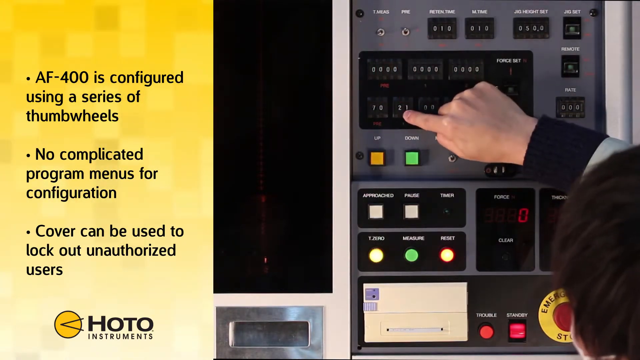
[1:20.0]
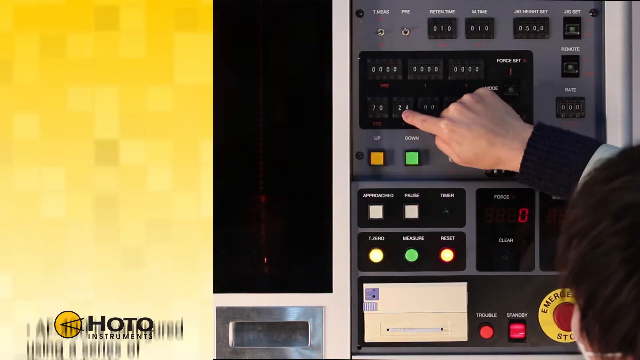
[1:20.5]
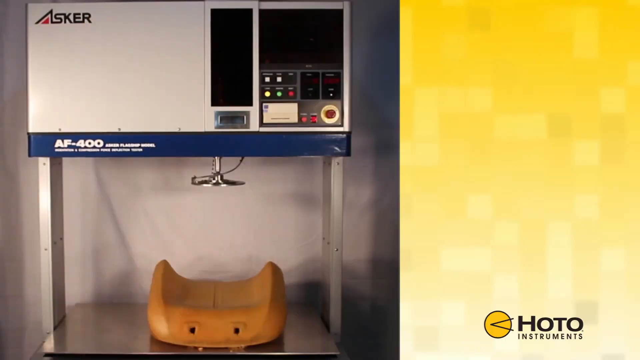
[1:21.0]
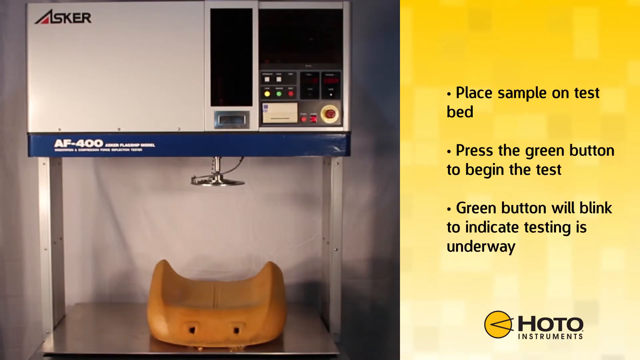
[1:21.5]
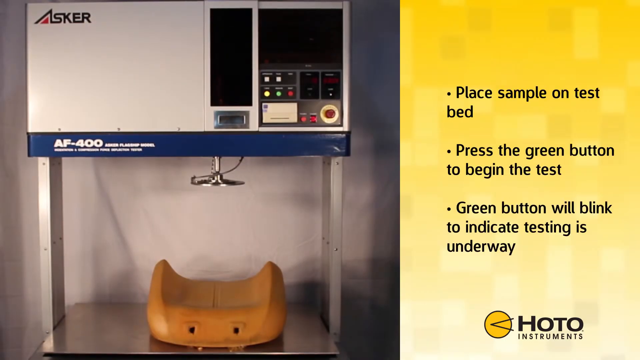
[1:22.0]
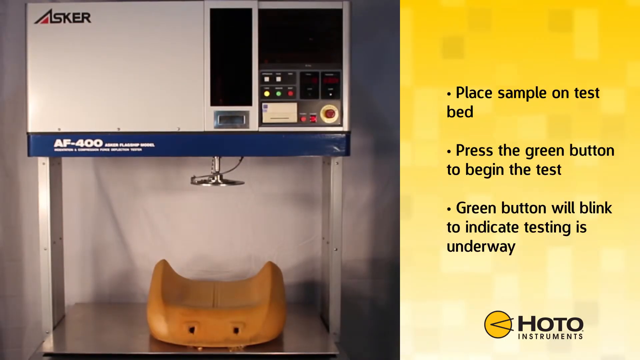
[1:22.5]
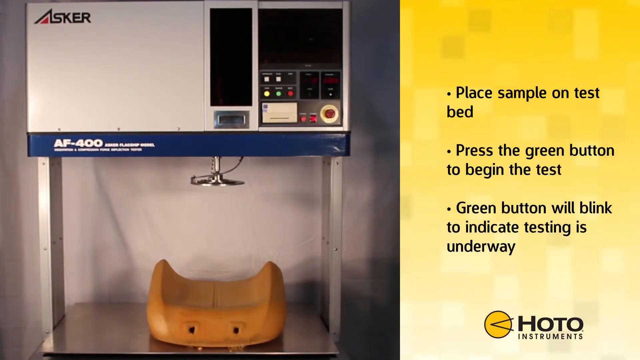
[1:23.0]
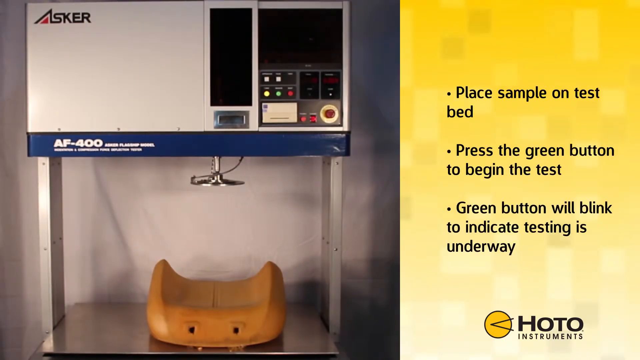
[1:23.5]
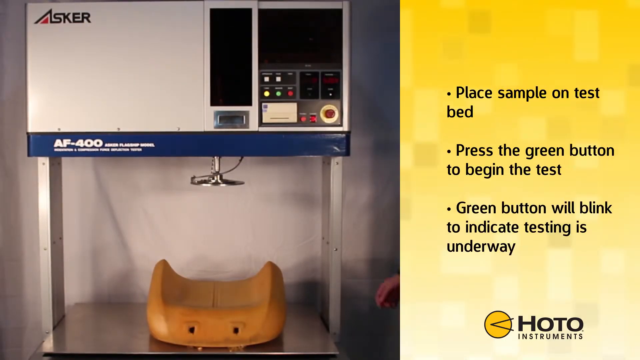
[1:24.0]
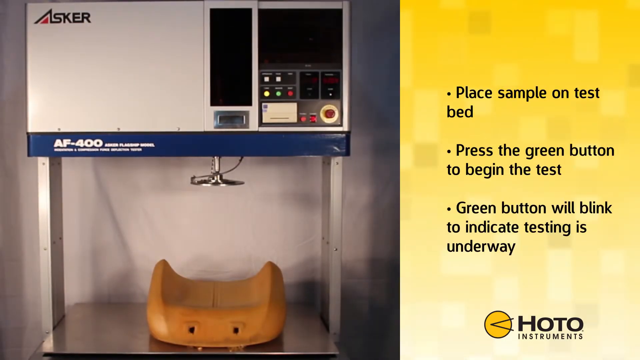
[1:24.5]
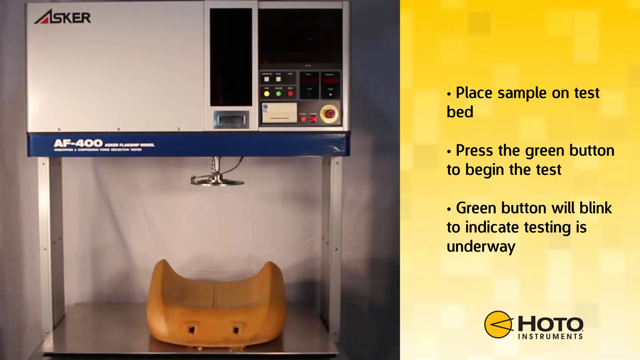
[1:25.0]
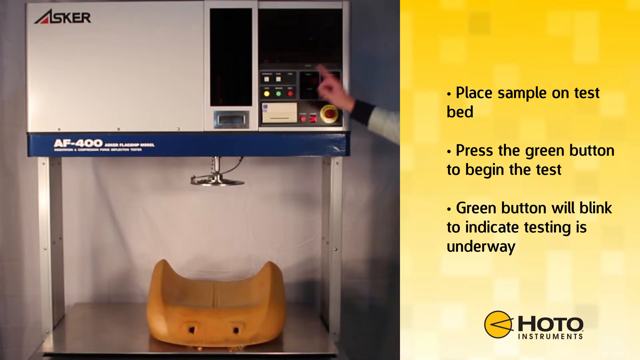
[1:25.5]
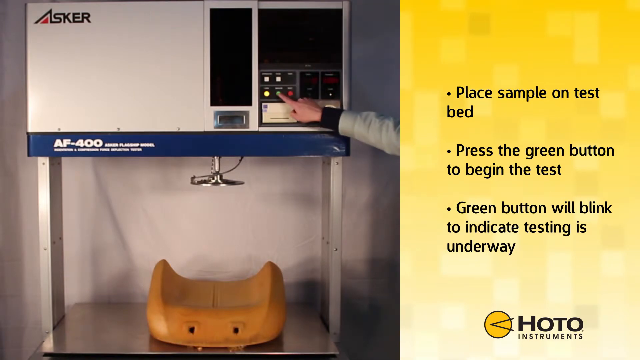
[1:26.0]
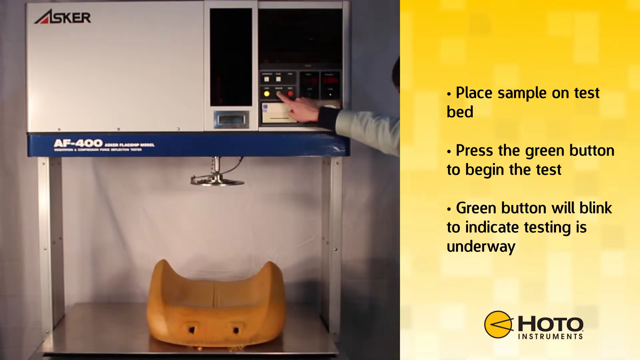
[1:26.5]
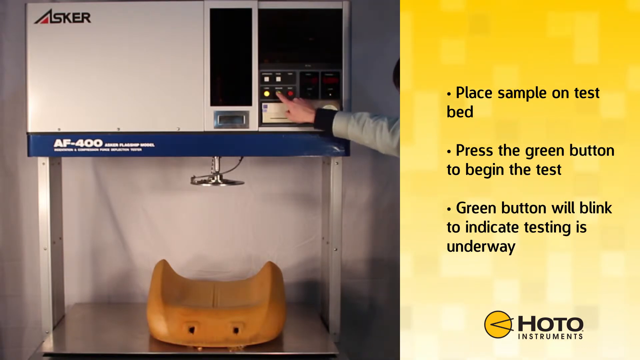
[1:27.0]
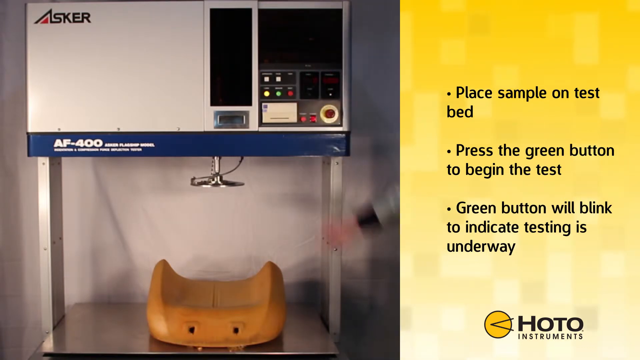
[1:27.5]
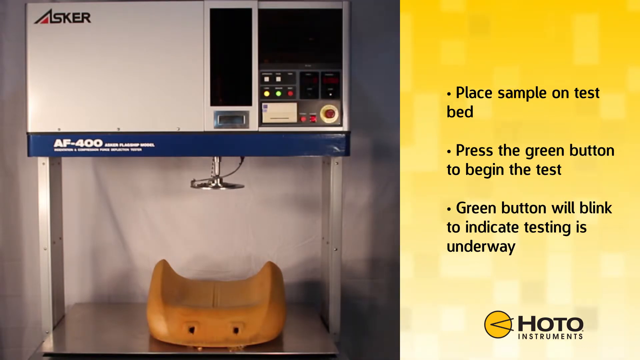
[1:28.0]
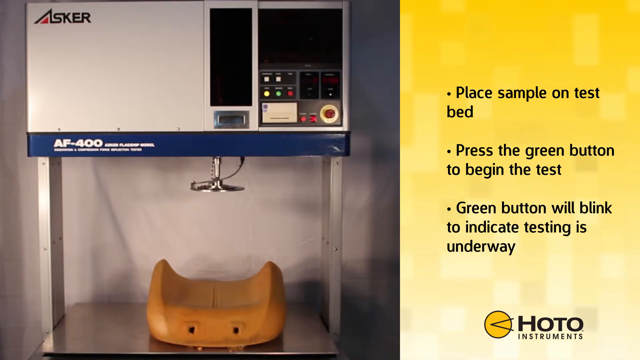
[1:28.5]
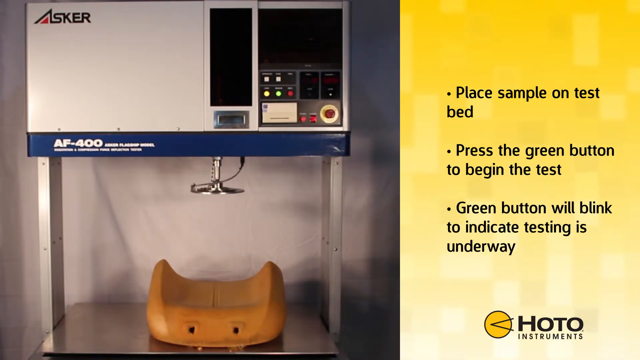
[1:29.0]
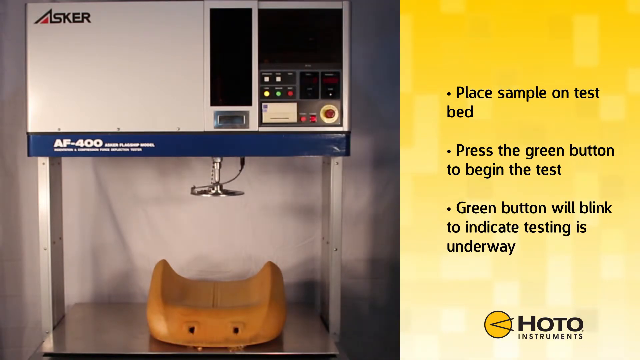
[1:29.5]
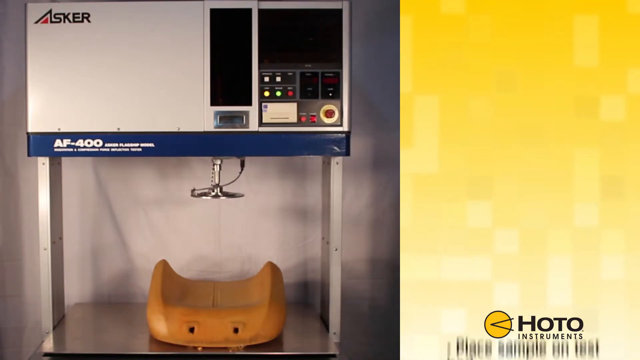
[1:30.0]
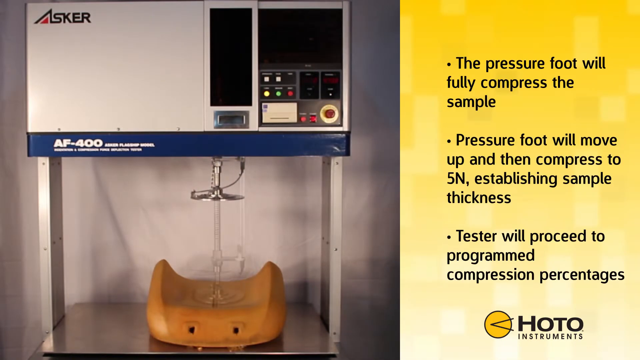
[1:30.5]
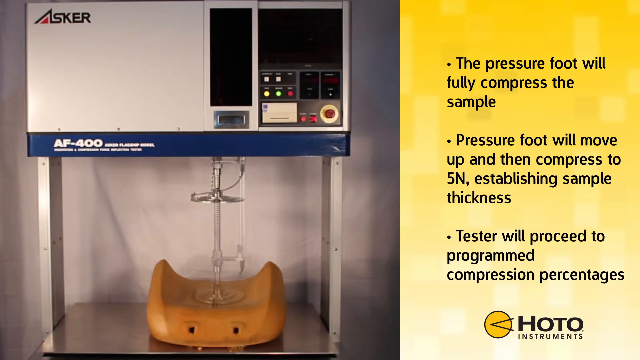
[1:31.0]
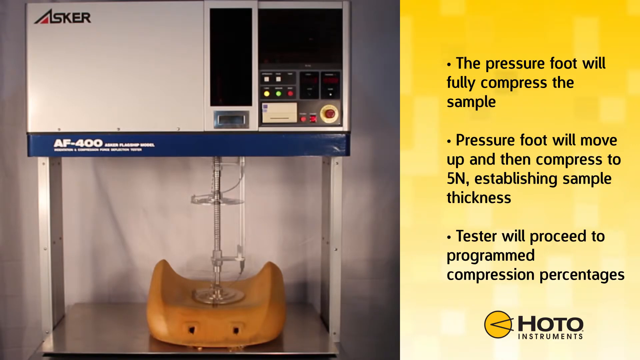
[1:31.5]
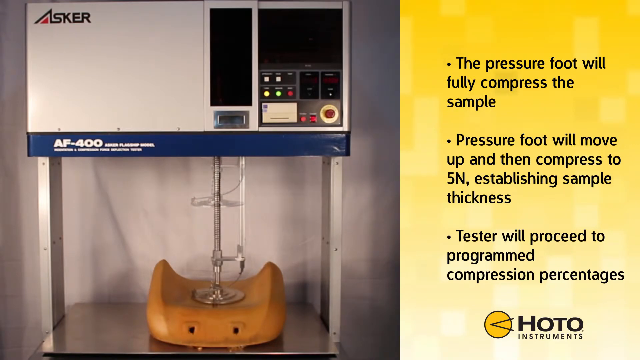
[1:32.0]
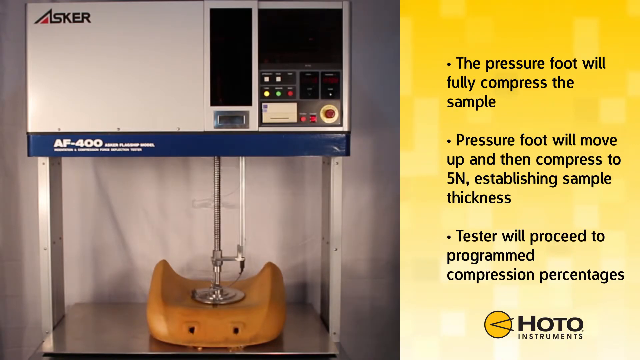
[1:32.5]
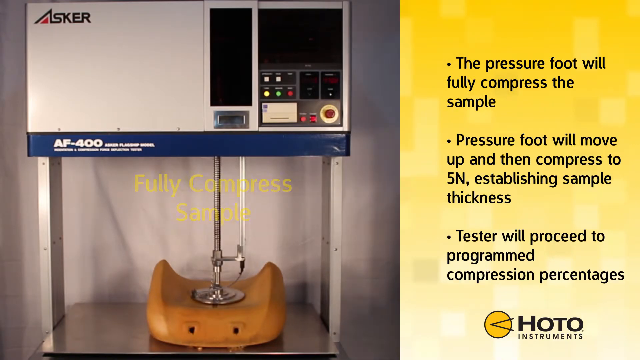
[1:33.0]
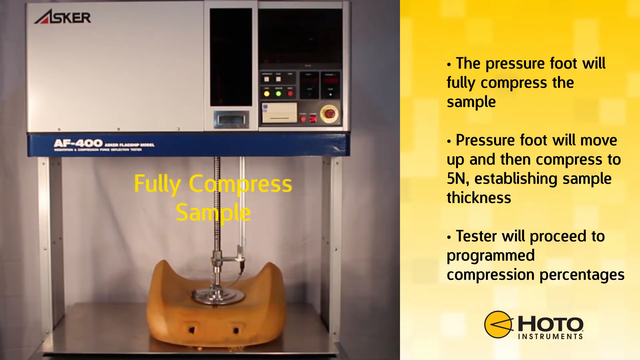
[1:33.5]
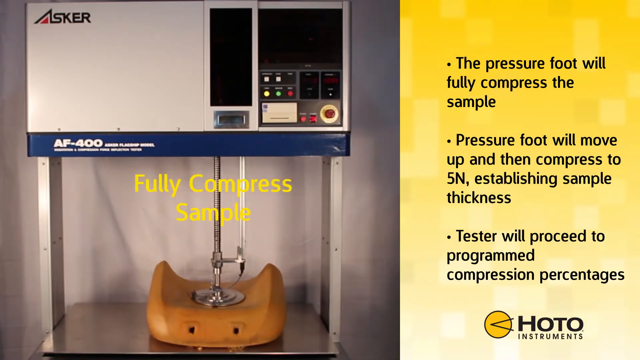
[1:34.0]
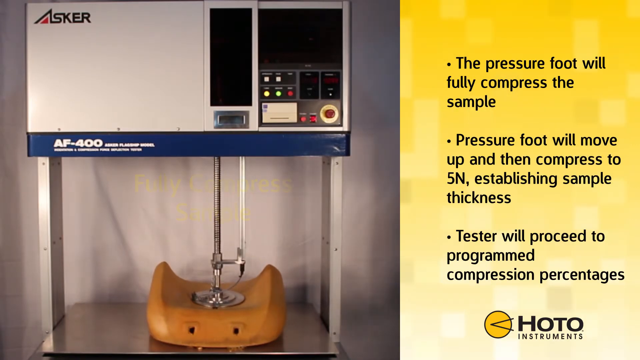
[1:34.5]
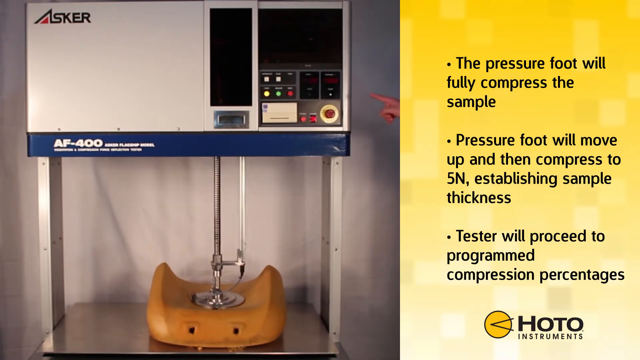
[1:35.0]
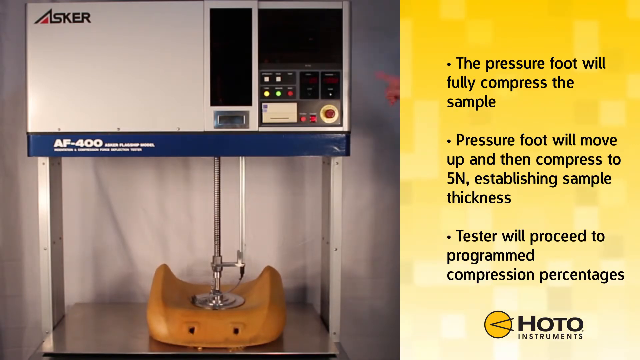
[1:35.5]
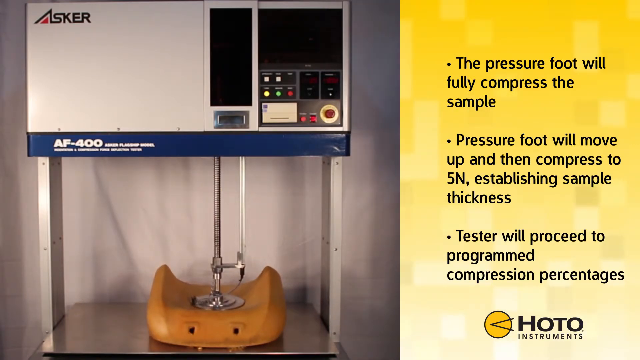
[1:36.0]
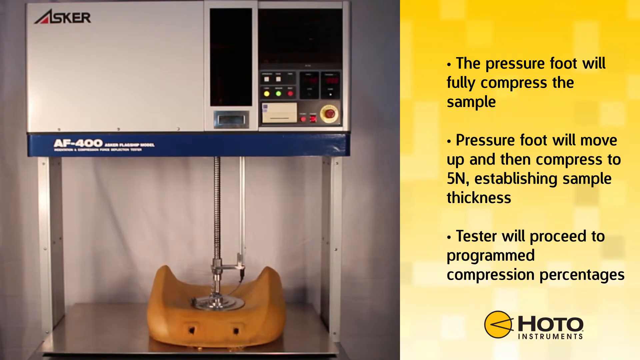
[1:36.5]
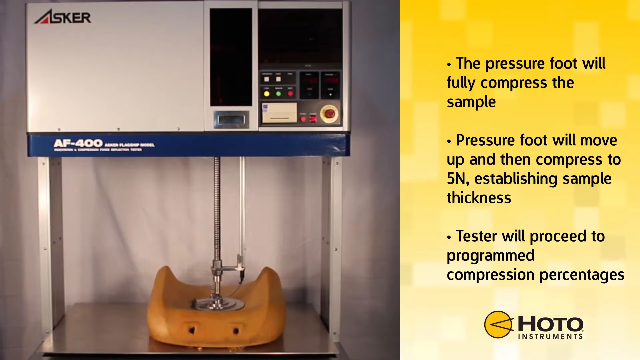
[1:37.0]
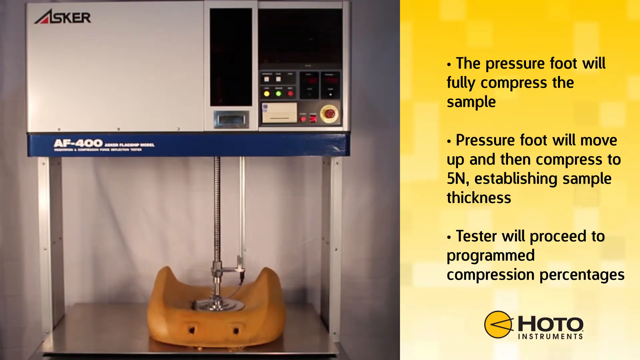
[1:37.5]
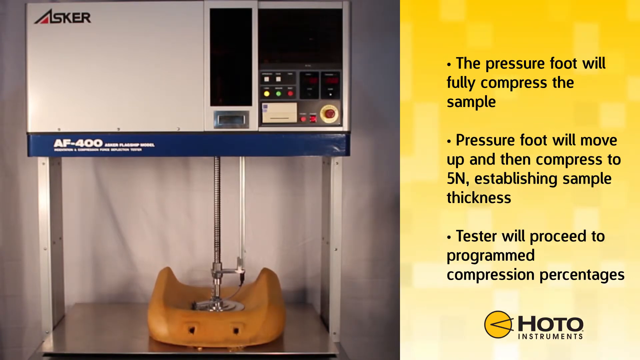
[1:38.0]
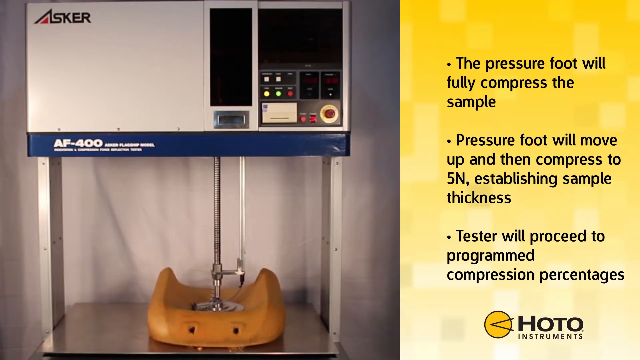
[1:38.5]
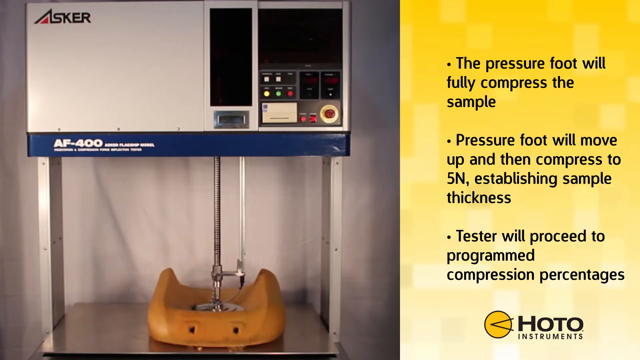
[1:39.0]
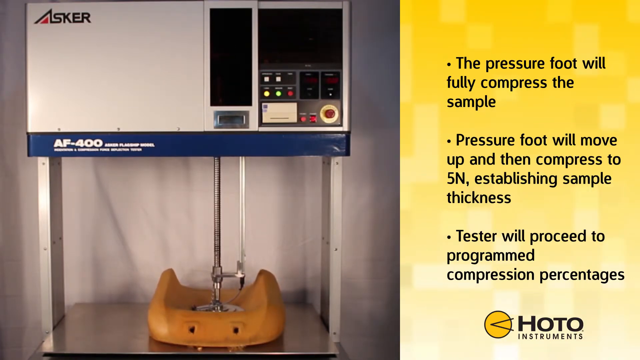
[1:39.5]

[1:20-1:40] A slide describes how the machine is configured: "thumb wheels", "no complicated menus", "cover can be used to lock out unauthorized users". The final images show someone kind of pushing on buttons. Another screen follows with three more bullet points: "place sample on test bed", a line about the green button, and "green button will blink to indicate testing is underway". The foam tester appears about to test foam. Someone pushes a button and a lever goes down; the footage is apparently fast-forwarded, as the lever is suddenly pushing down on a piece of foam. It keeps pushing, then stops. The video returns to the slide reading "AF is configured using a series of thumb wheels", "no complicated menus or configuration". The view looks like half of a slide, and there appears to be an instrument manual.